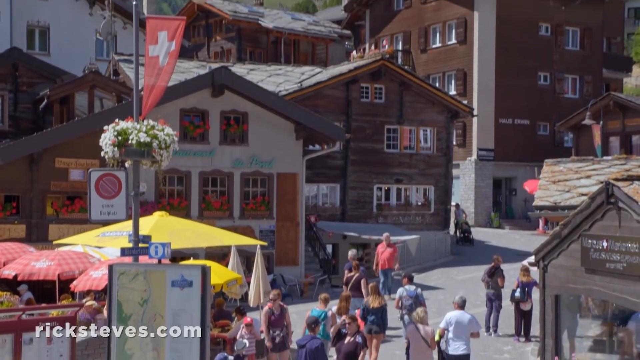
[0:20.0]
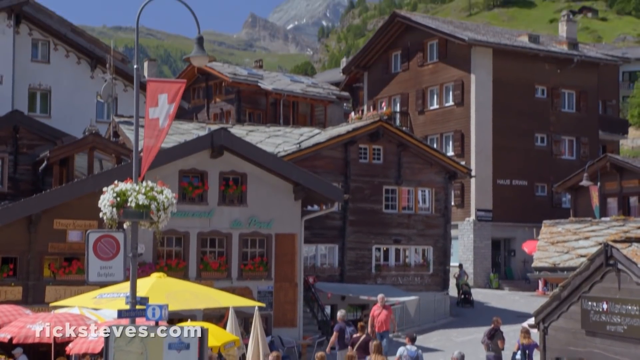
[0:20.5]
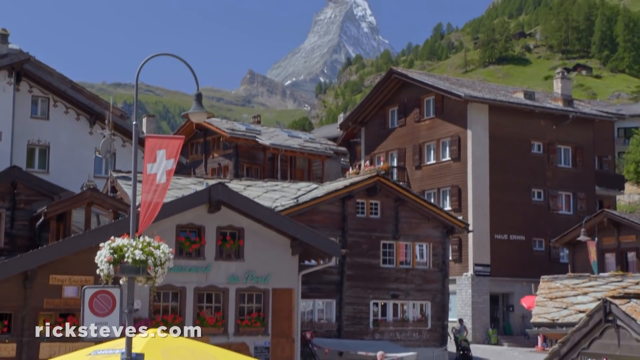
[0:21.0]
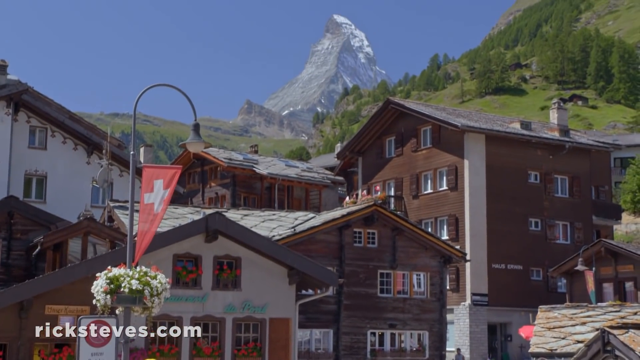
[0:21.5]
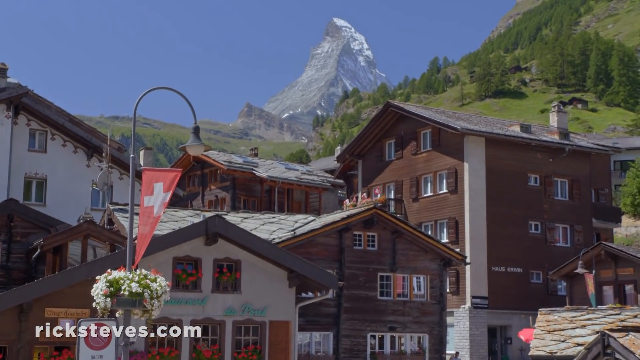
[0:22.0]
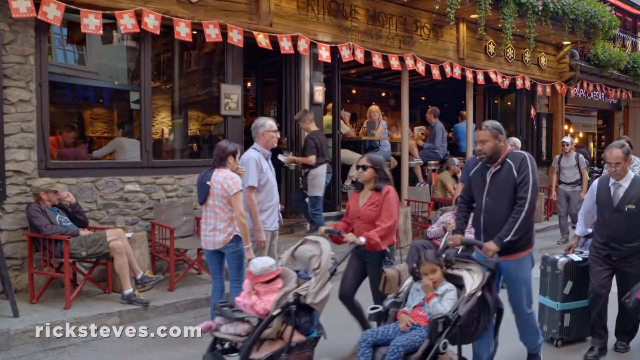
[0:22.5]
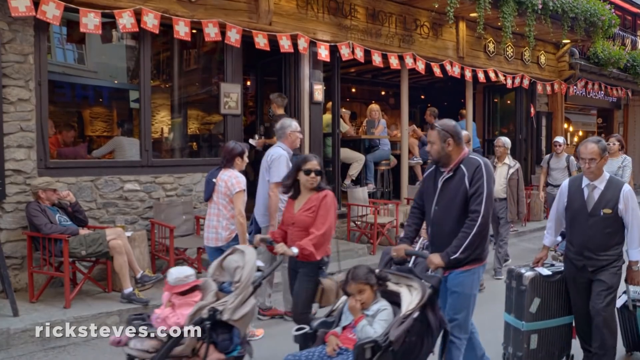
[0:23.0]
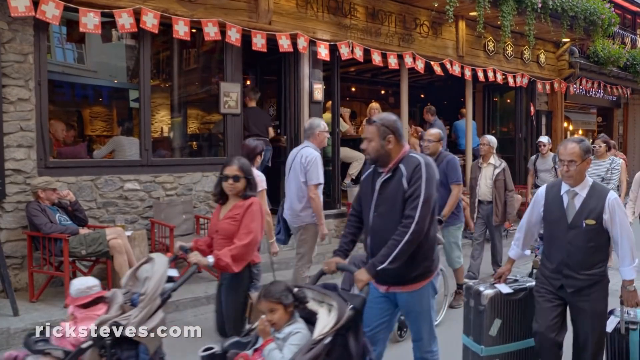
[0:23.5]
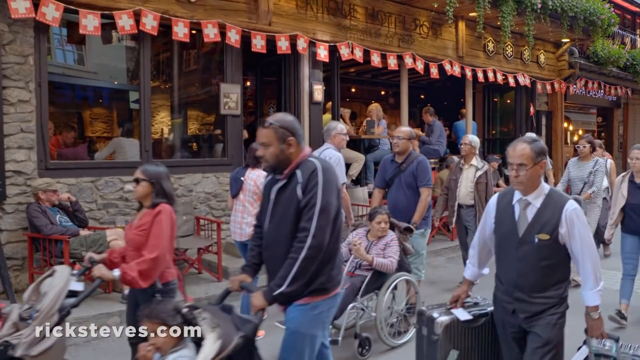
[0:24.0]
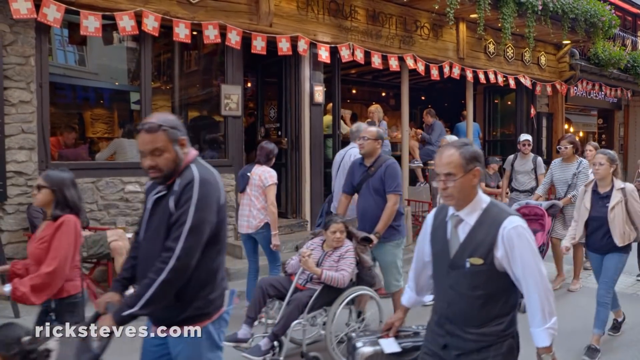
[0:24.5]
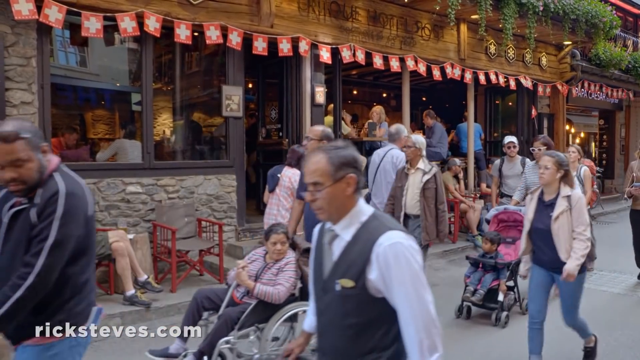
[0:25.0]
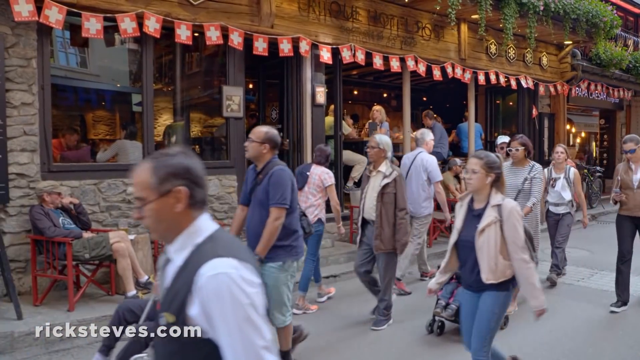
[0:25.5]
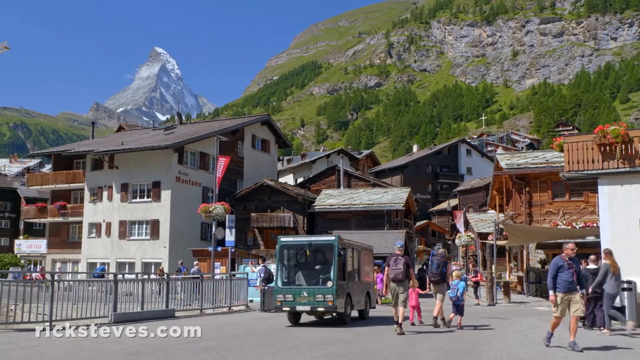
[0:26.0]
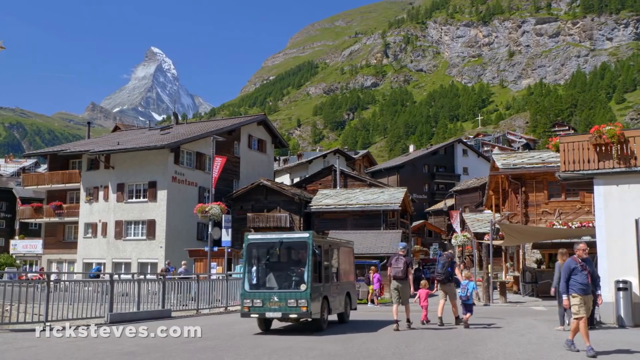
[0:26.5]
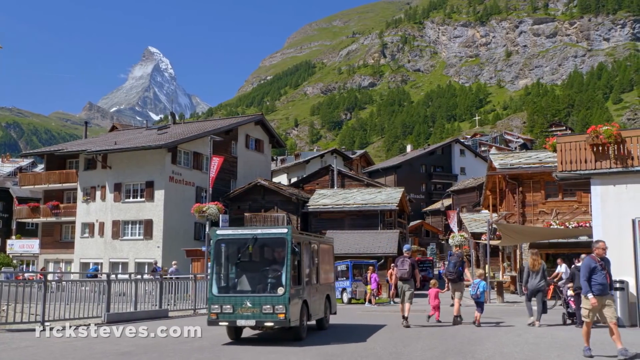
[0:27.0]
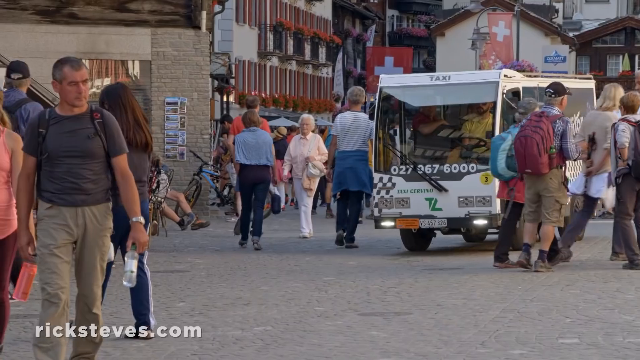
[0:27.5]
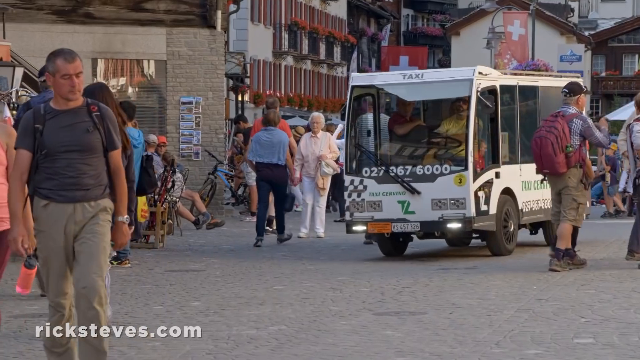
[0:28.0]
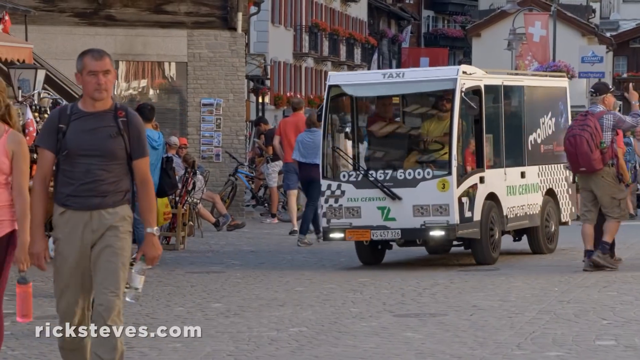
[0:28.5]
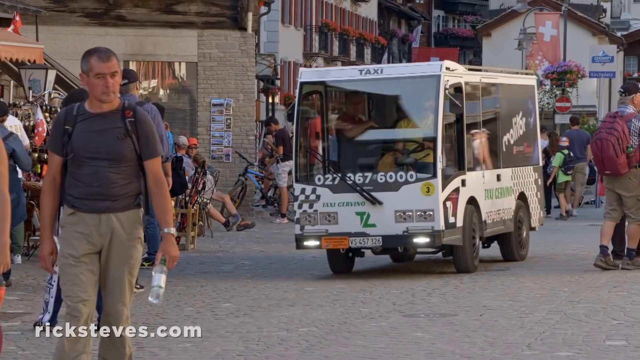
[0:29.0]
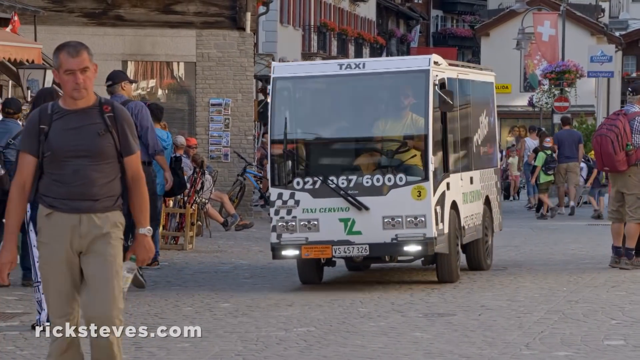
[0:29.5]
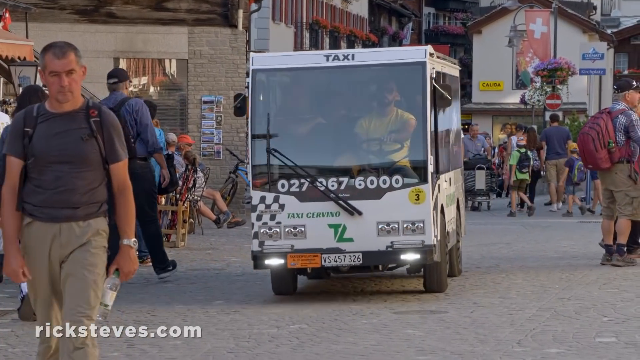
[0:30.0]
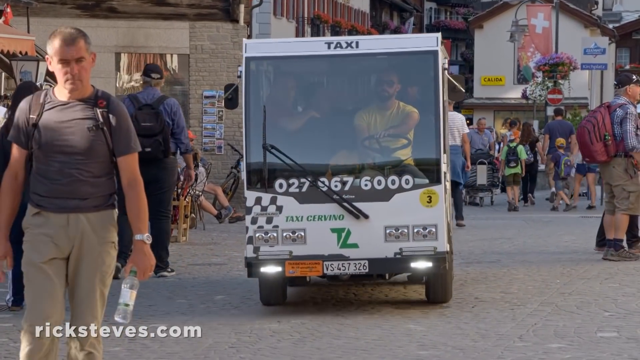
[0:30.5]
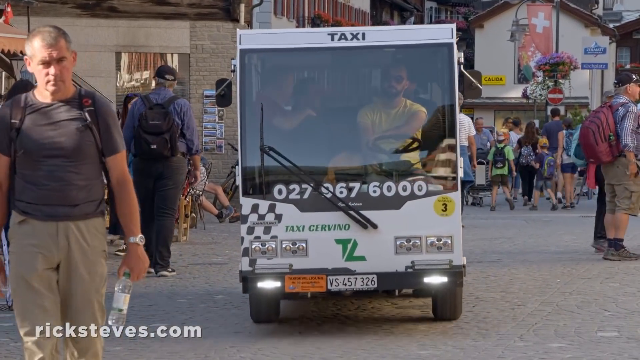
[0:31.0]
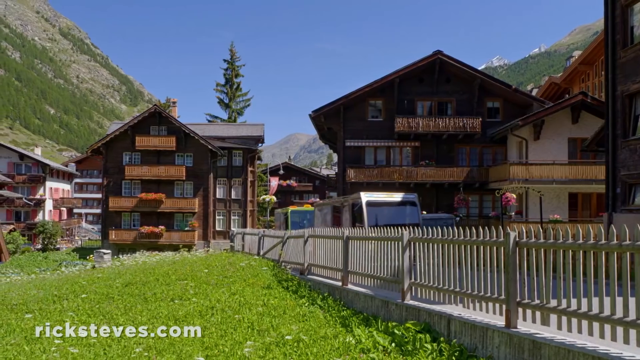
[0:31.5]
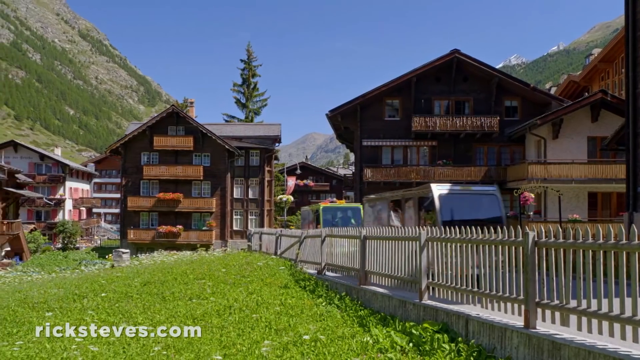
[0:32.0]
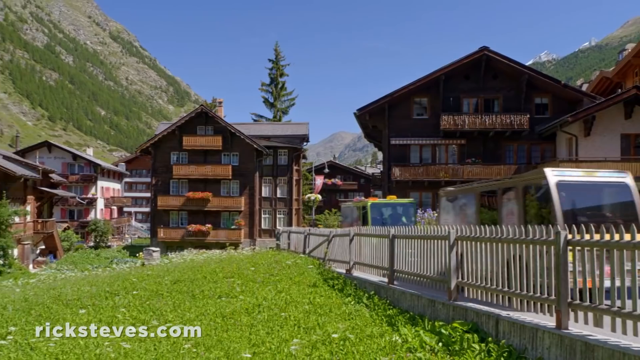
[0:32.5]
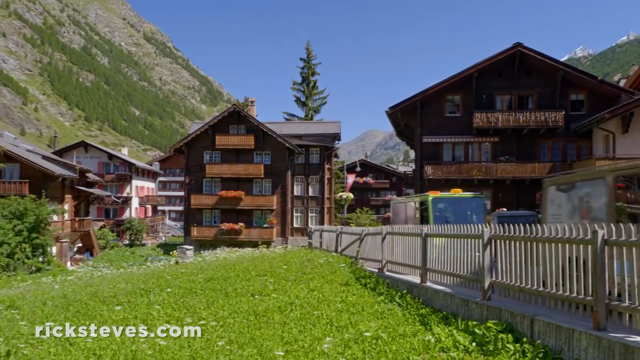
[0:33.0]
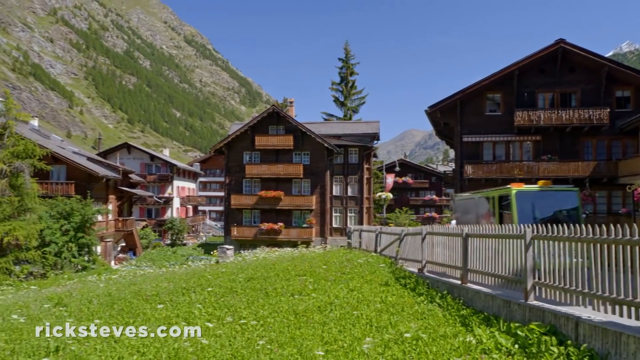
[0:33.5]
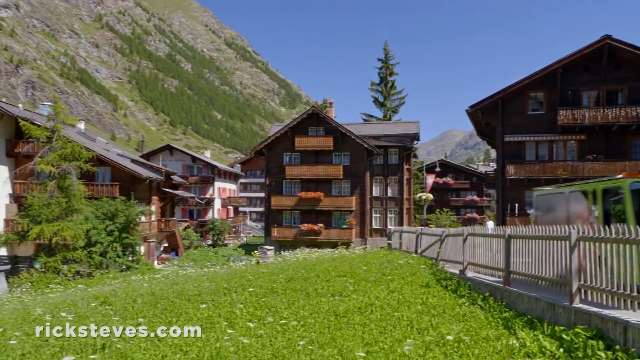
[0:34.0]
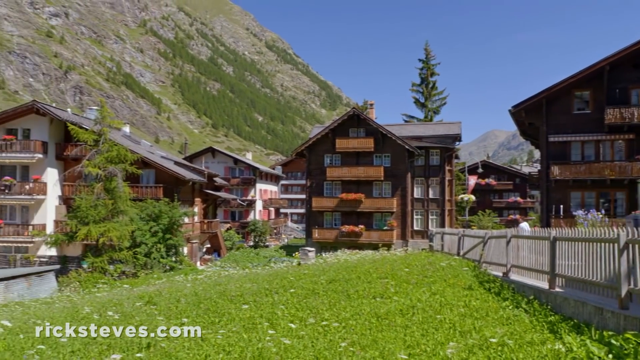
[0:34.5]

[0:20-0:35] The video is about Zermatt, Switzerland, finding charm in the Swiss Alps. Houses line a busy downtown area where people walk and look at shops. Some small buses drive through, possibly dropping off or picking up tourists. A Swiss flag flies from a lamp pole. People walk by what looks to be a restaurant, where people sit inside eating. There are grassy areas, and the side of a mountain with grass and trees is shown. People push strollers and walk with young children, and almost everyone has a backpack on. The tourist area with its houses and shopping center is shown; it is hard to tell whether the buildings are houses, hotels or rentals, but they look like houses with balconies and flowers on the balconies.